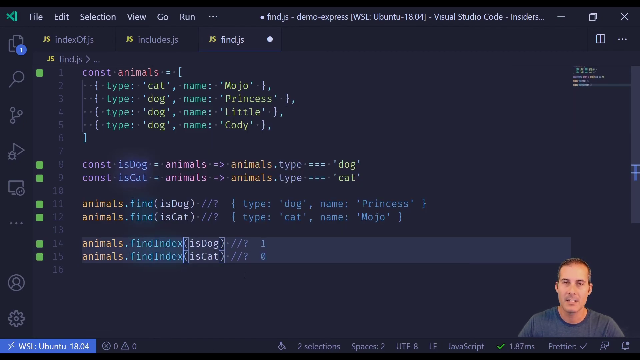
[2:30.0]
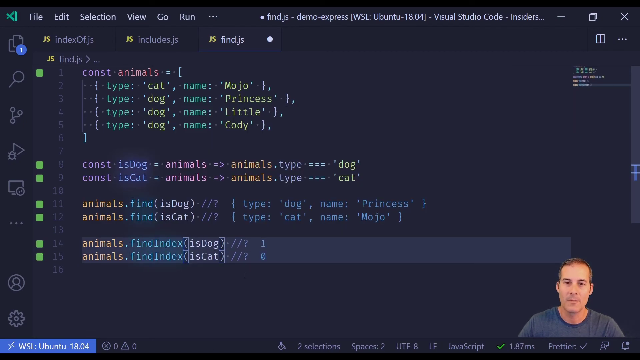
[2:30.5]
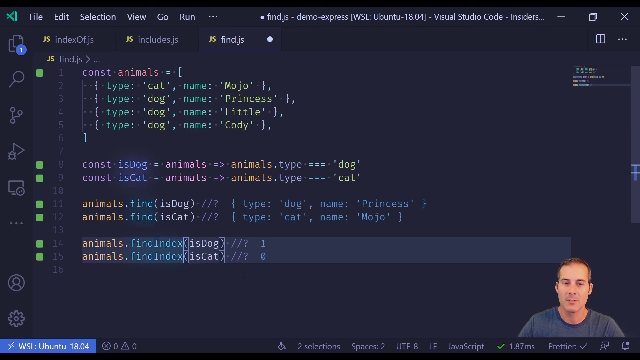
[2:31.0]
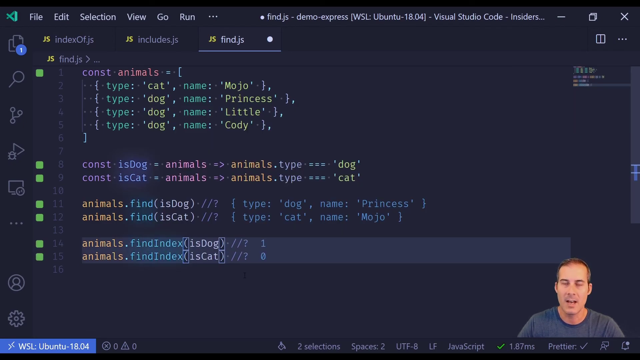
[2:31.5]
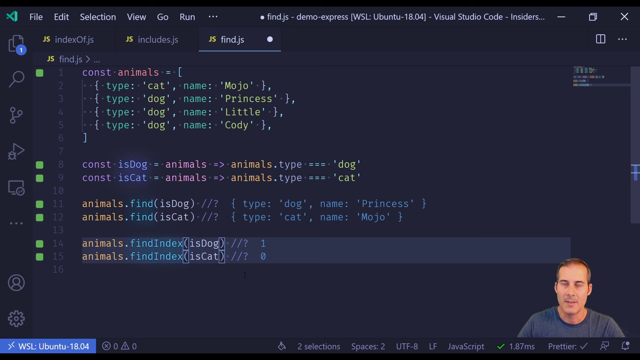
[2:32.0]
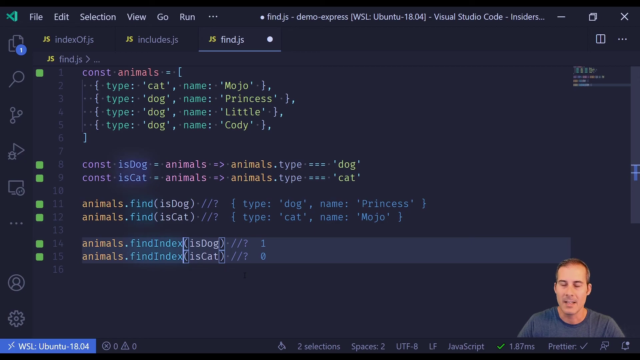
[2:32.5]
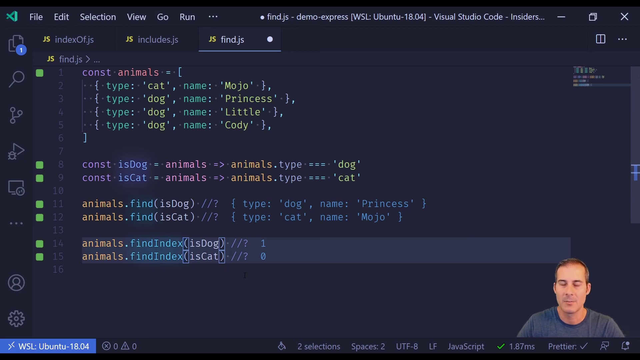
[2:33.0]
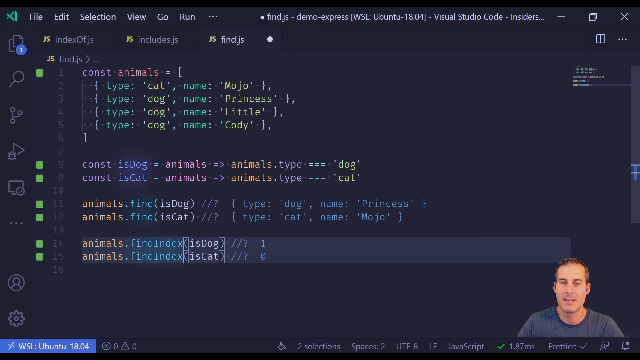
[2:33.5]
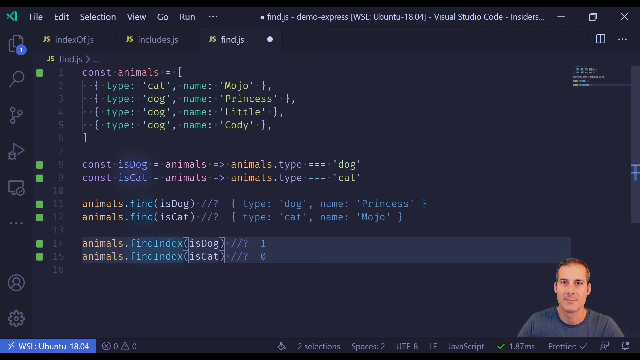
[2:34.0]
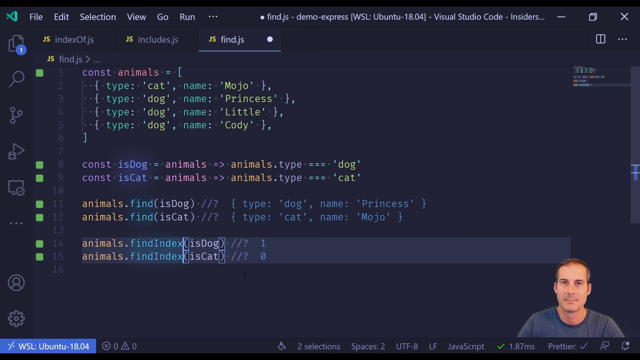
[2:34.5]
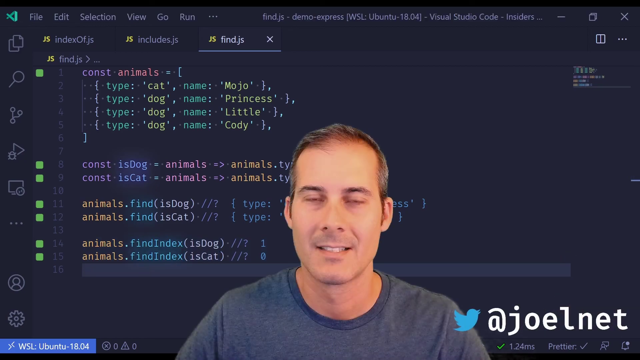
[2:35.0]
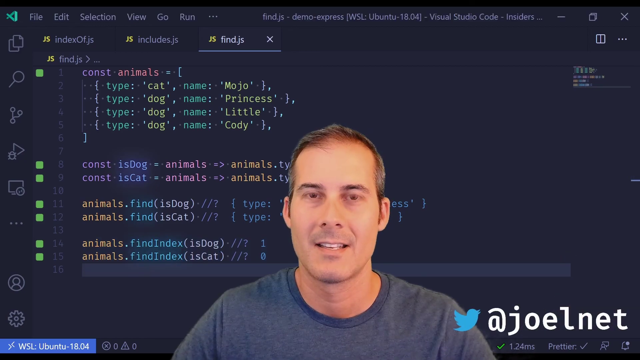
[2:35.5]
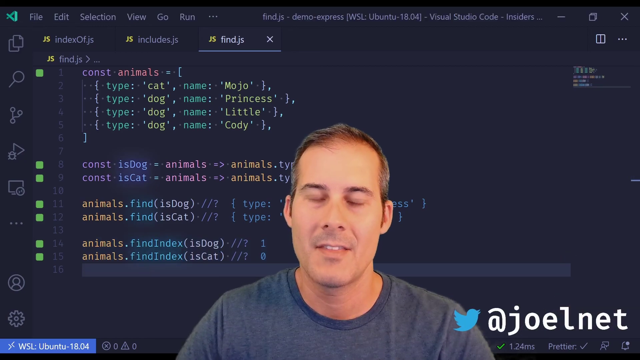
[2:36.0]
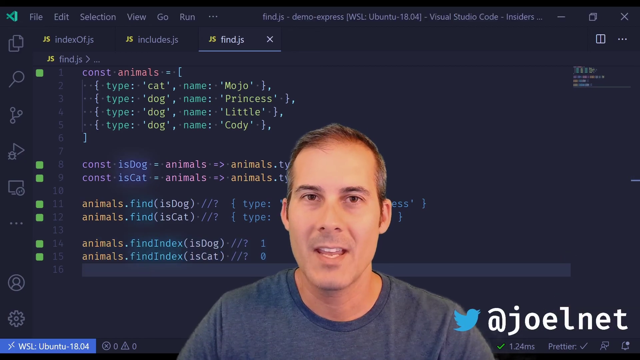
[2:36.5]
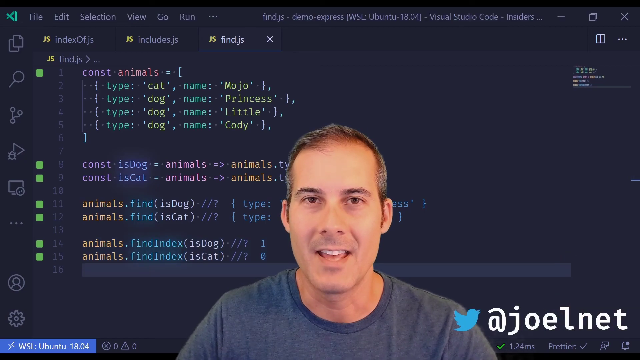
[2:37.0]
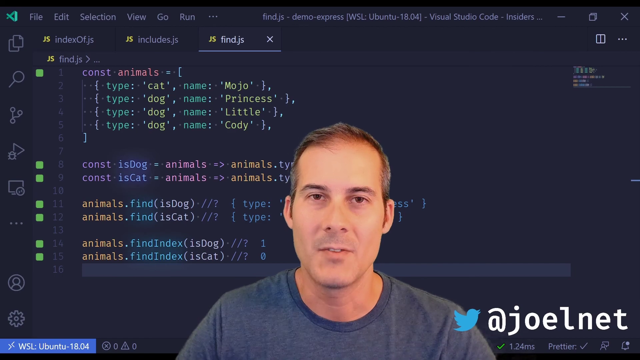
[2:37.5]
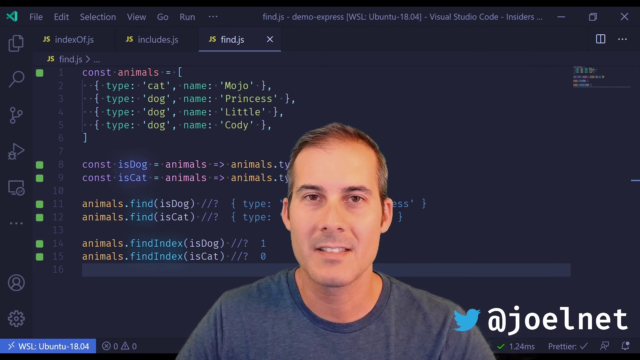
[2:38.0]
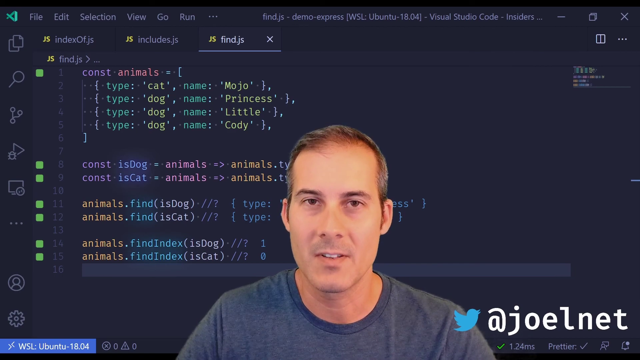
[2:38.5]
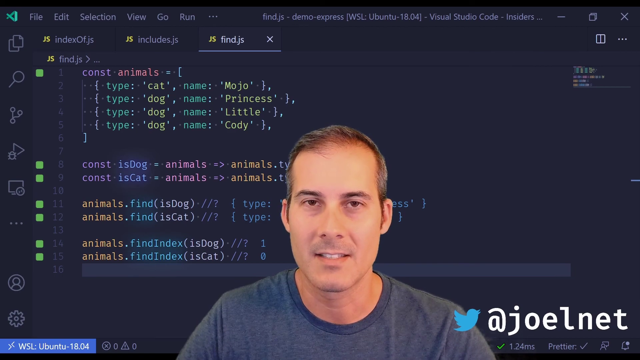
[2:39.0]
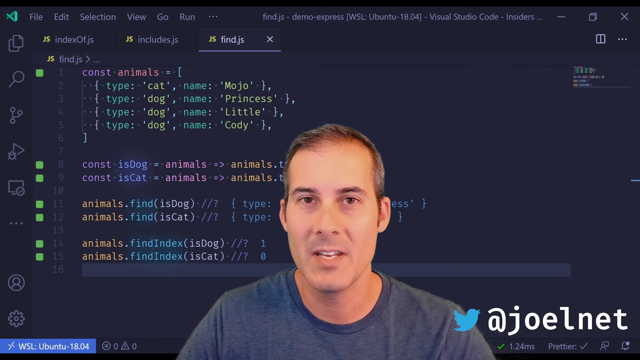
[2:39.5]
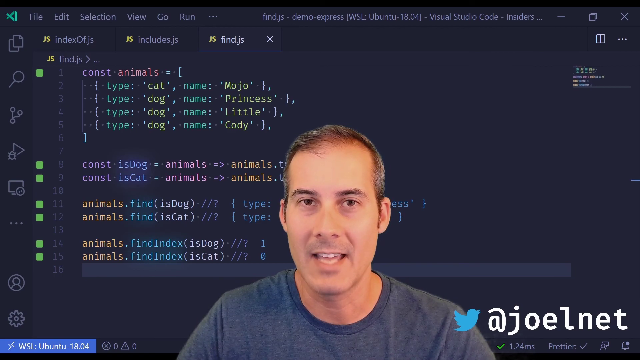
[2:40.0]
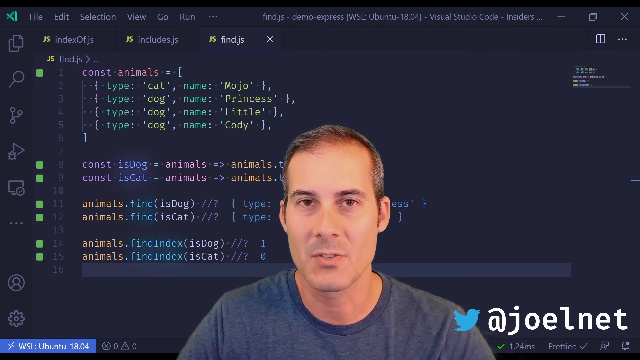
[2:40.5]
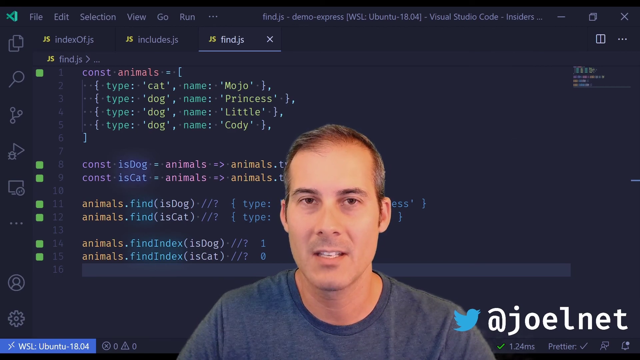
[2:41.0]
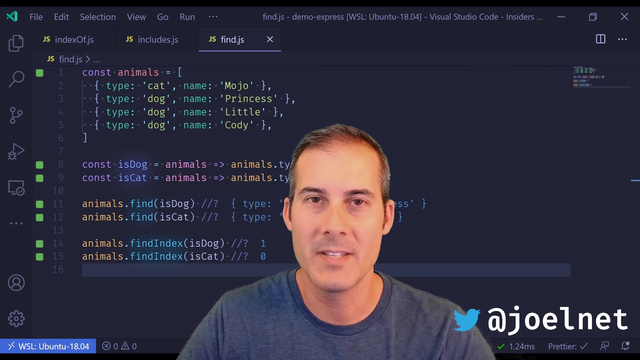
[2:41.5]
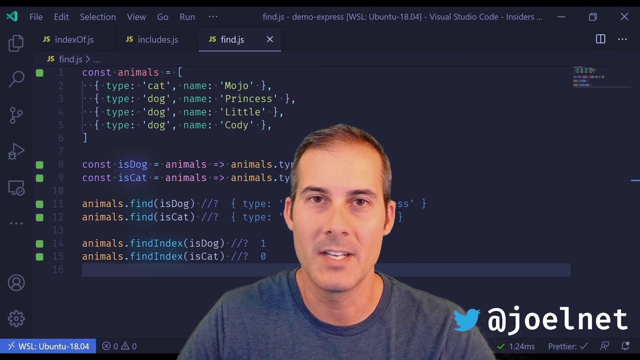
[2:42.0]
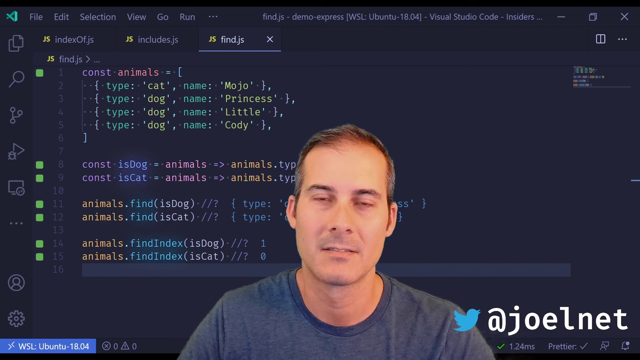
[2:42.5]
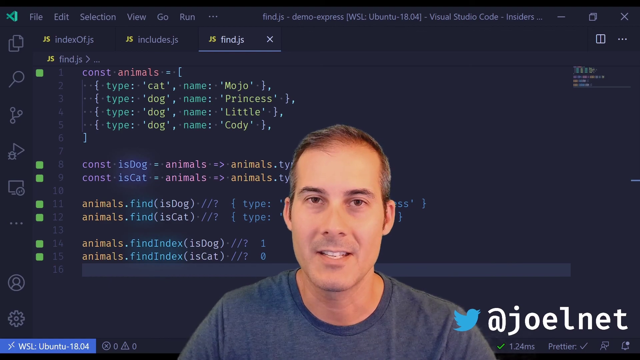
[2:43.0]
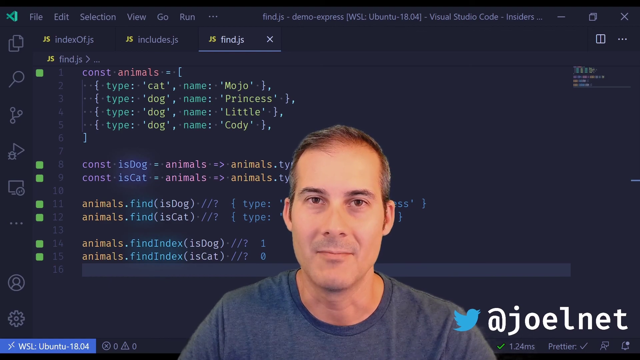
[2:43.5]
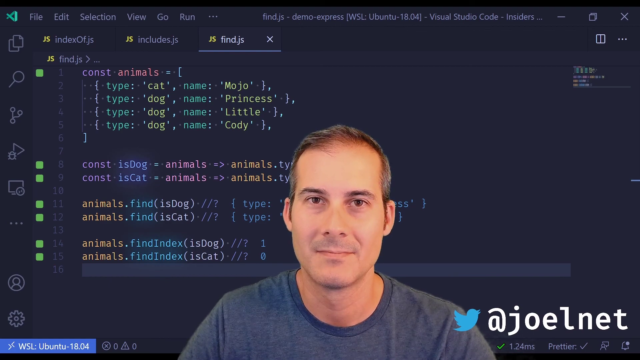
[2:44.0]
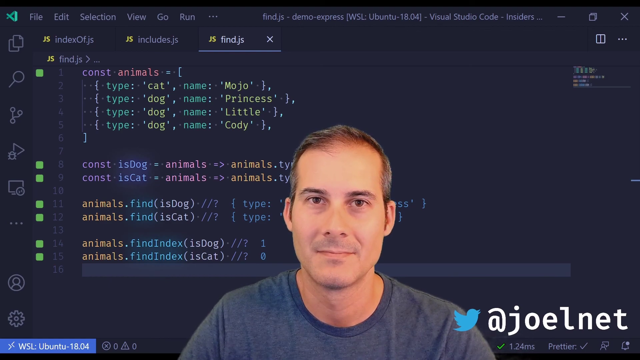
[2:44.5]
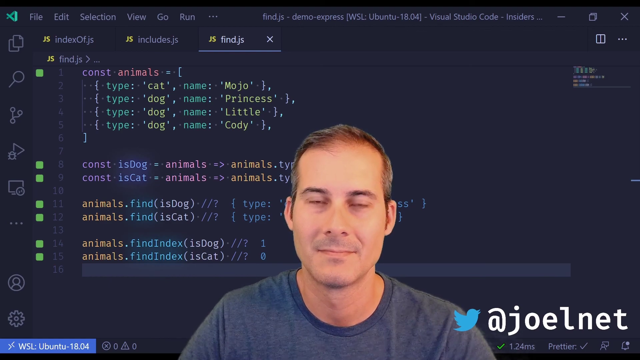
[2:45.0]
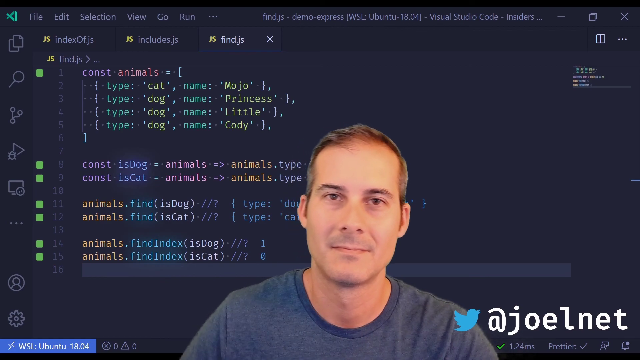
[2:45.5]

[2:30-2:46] Joel from Minute Javascript is in the bottom right corner. The animals code is on the screen, with types Cat, Dog, Dog, Dog and the names Mojo, Princess, Little and Cody. His complete computer screen is visible, with him to the right at the bottom of it, and he can be seen speaking. Also in the bottom right corner is his Twitter handle, "@joelnet".